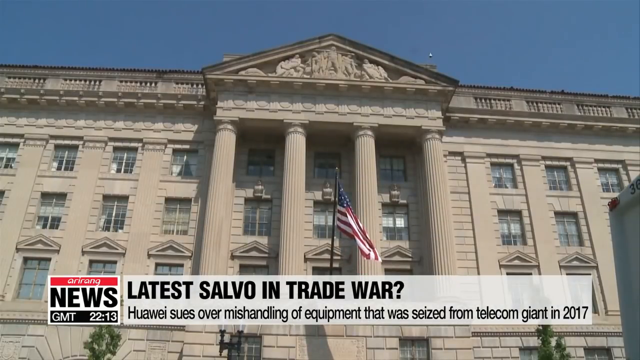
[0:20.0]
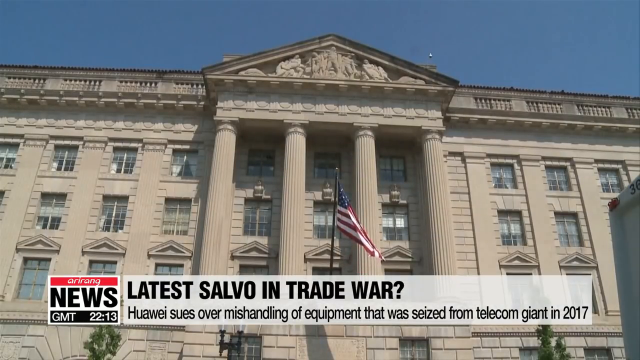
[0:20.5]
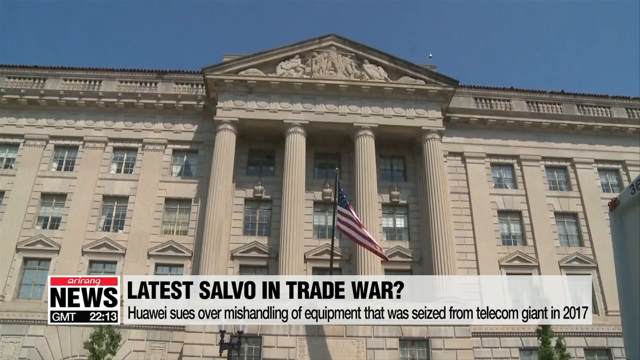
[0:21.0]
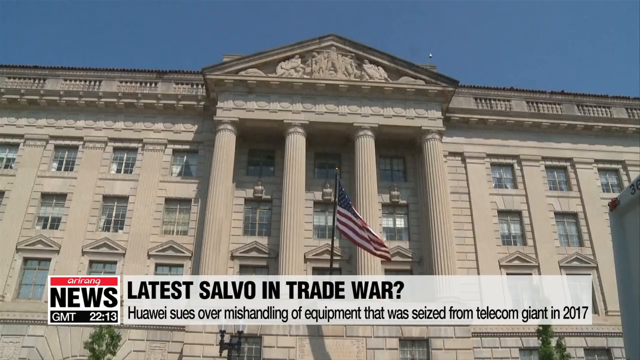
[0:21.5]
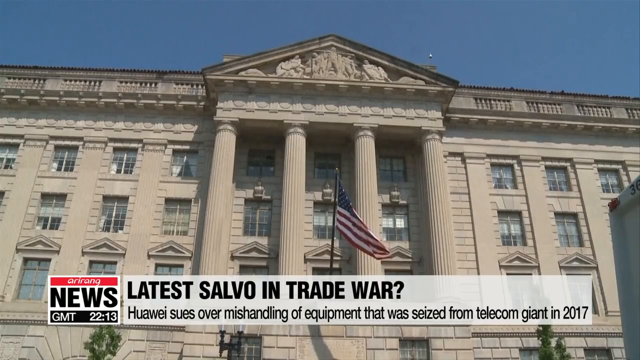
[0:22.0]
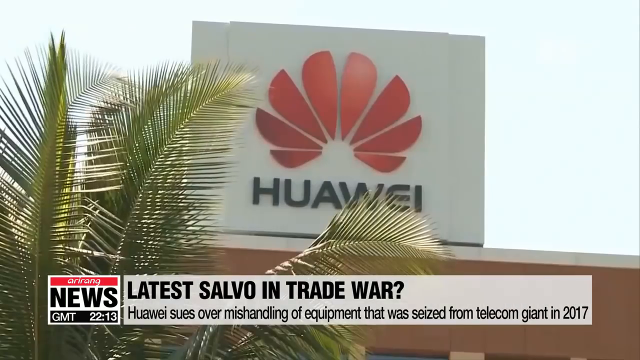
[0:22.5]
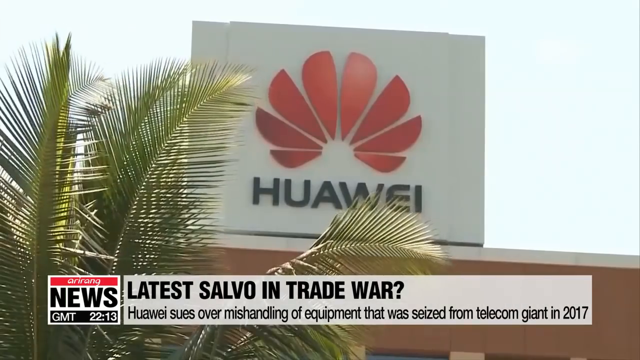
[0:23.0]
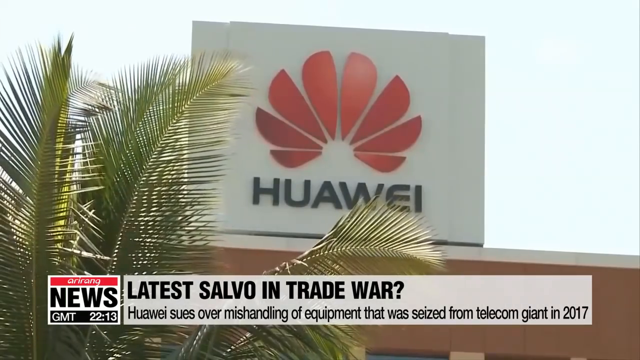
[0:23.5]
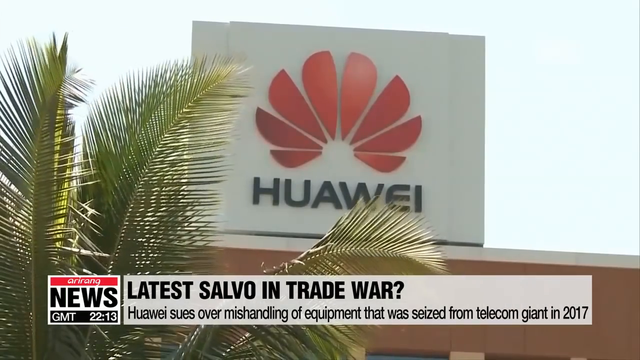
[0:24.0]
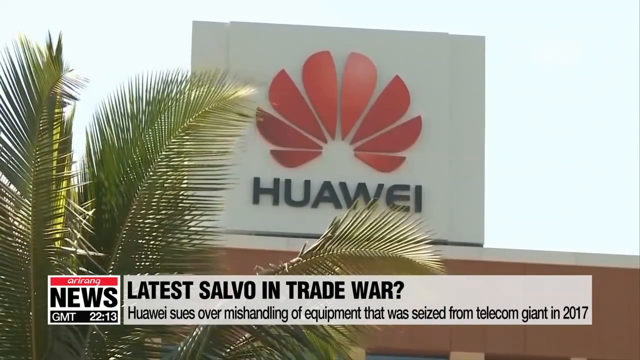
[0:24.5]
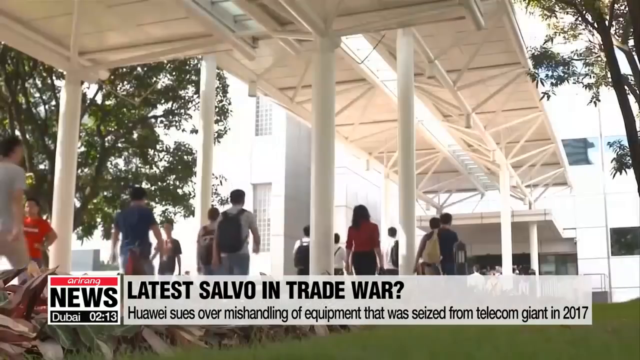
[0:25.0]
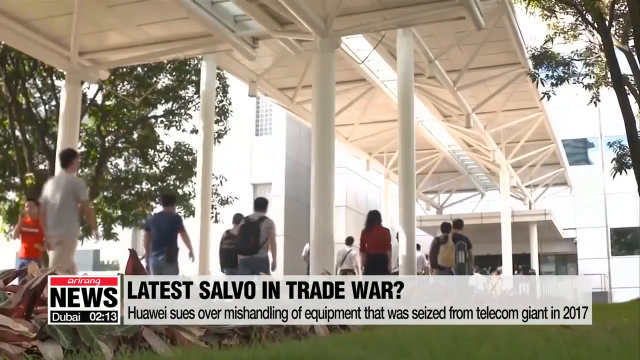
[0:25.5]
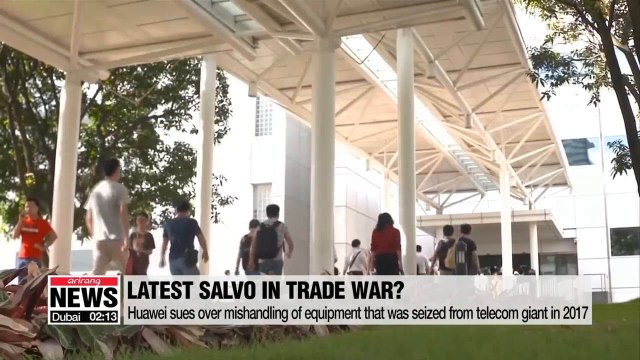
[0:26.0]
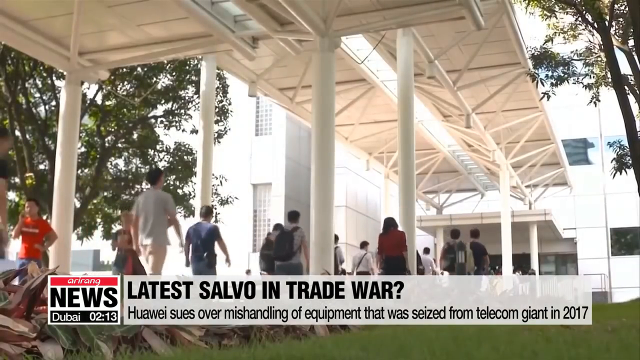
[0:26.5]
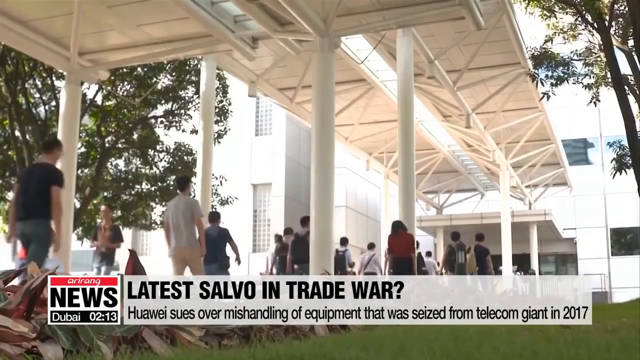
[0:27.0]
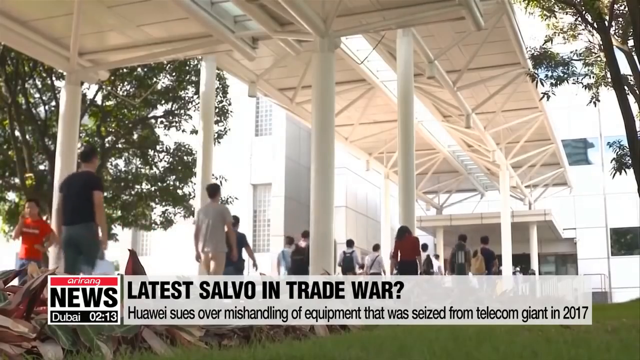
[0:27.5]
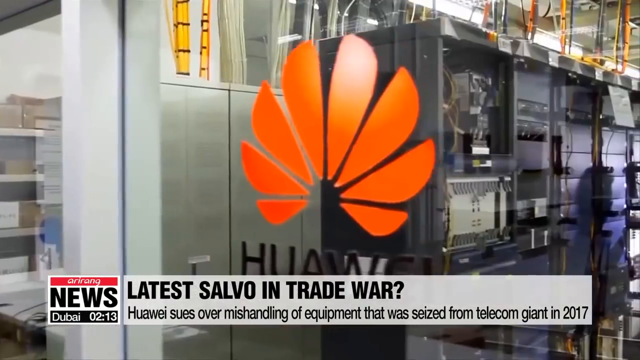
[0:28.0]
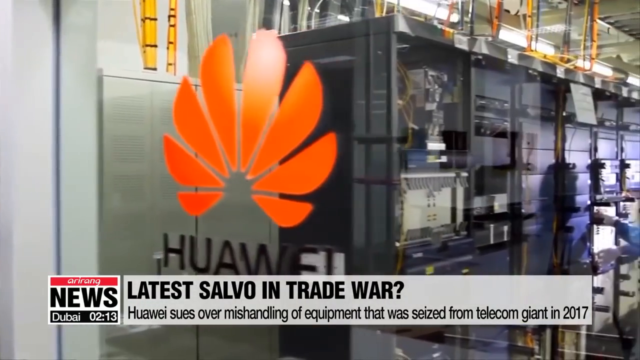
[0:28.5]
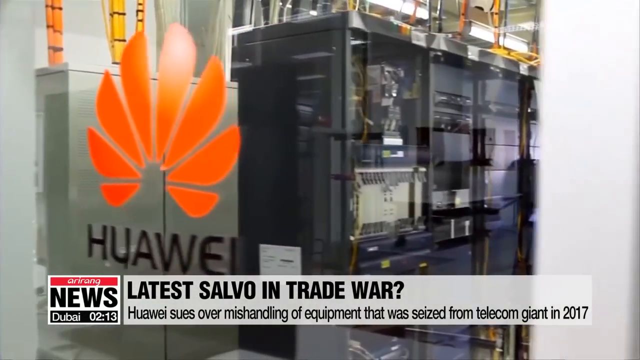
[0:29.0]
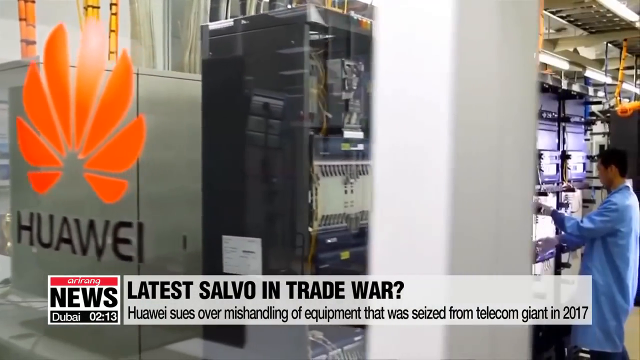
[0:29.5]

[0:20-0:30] A building is framed from the front. At its base there is an American flag attached to a pole, four very high columns are in front of the building, and rather small windows cover the entire facade. Next, a sign positioned on the upper part of a building is shown, with a palm tree in the lower left corner; the sign has a red logo and black writing in its lower part. A group of people then walks underneath some white structures toward a white building. Finally, a glass with white frames is shown, bearing an orange logo with black writing.